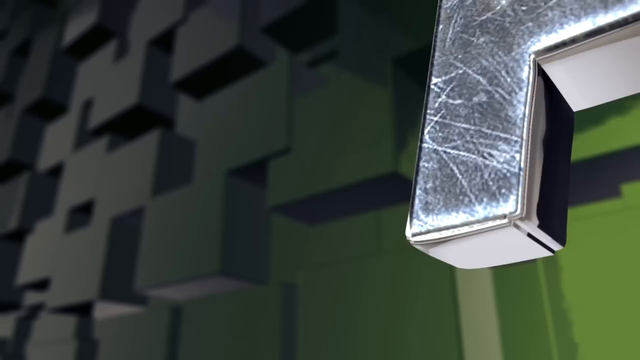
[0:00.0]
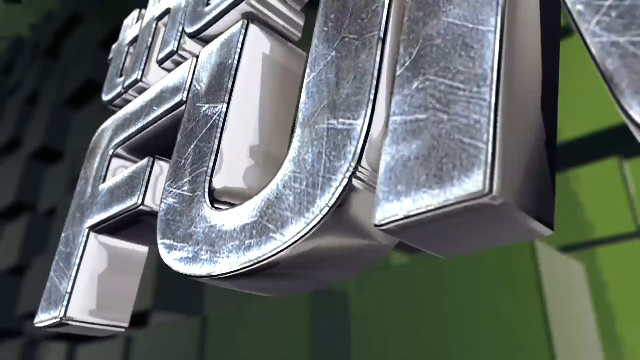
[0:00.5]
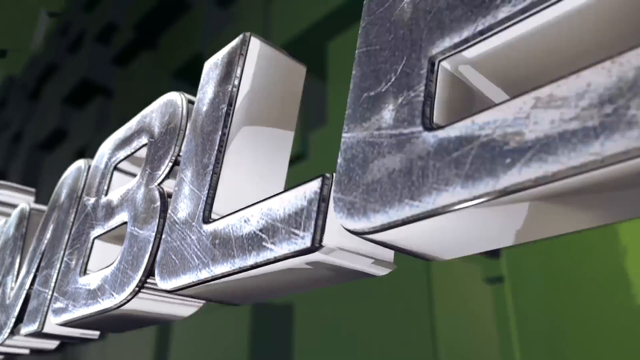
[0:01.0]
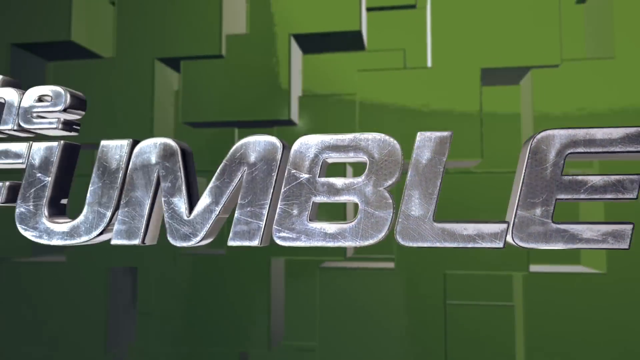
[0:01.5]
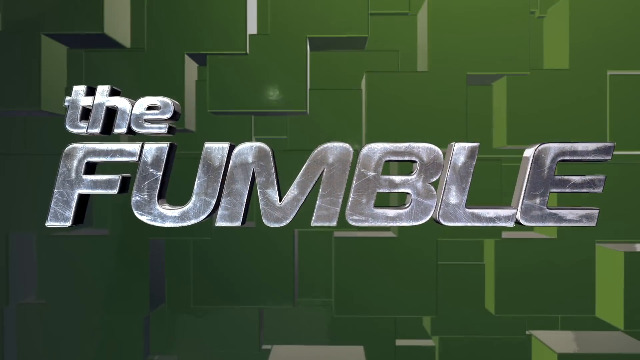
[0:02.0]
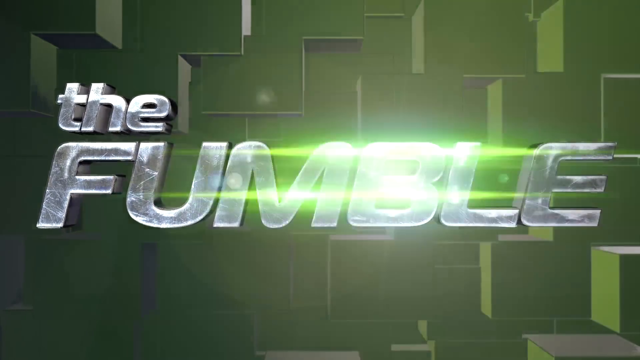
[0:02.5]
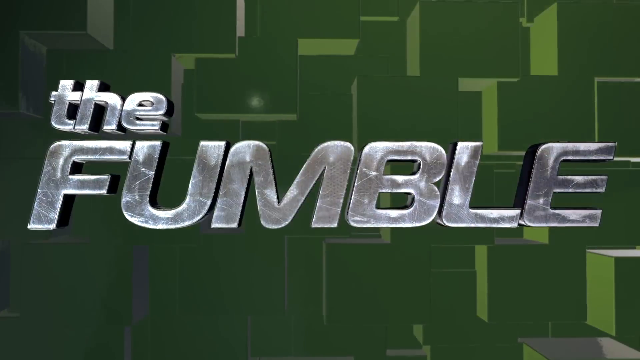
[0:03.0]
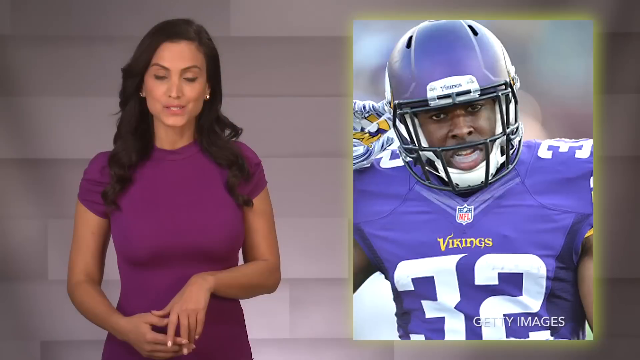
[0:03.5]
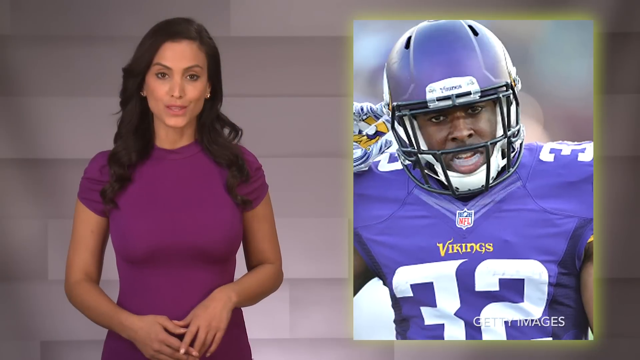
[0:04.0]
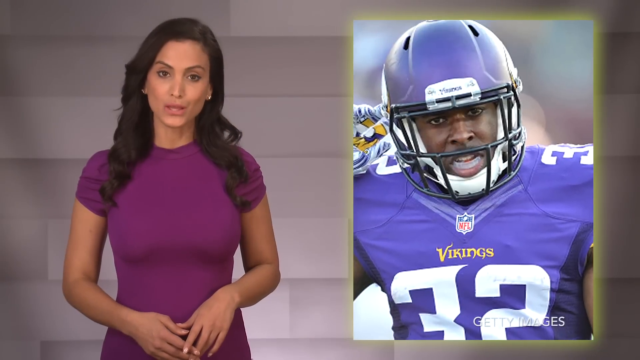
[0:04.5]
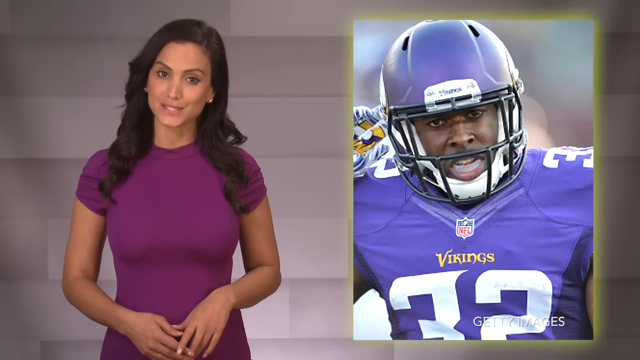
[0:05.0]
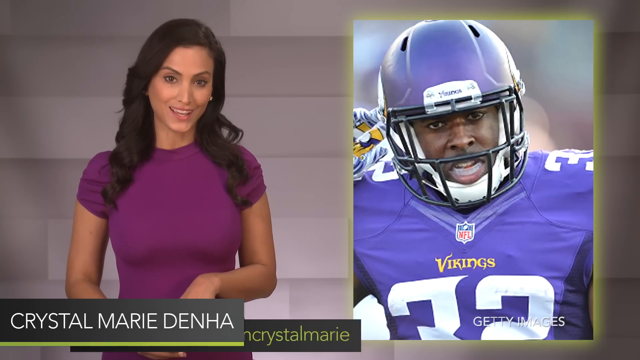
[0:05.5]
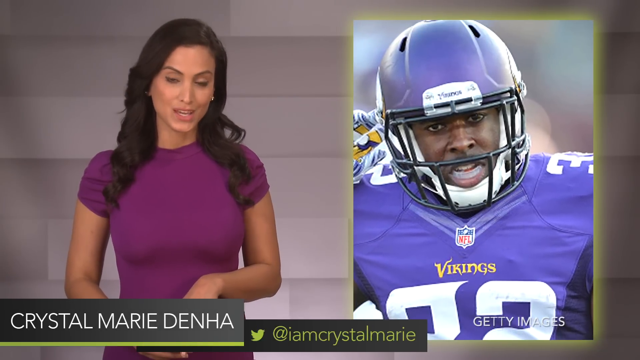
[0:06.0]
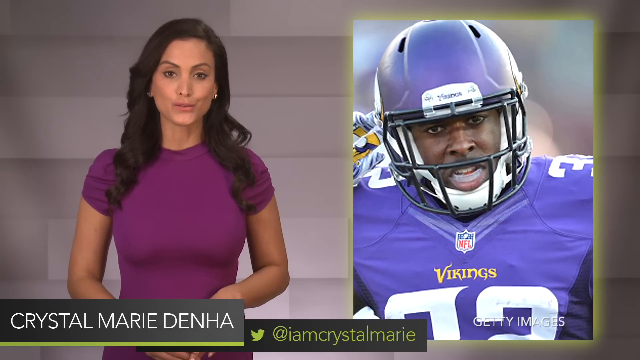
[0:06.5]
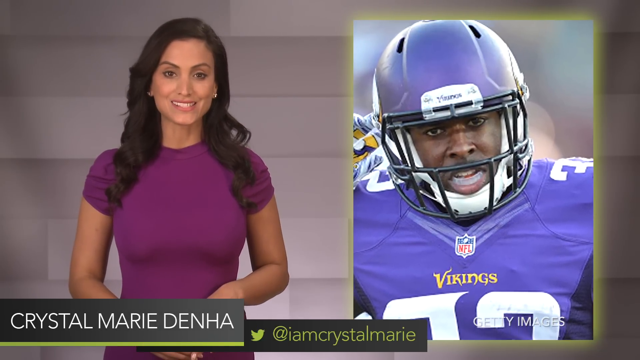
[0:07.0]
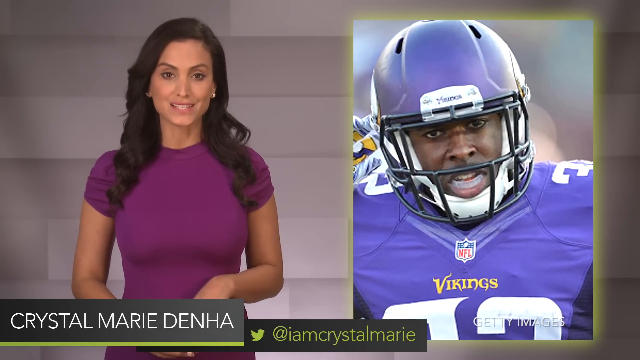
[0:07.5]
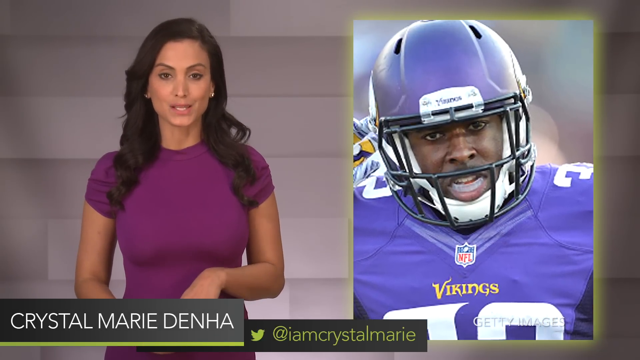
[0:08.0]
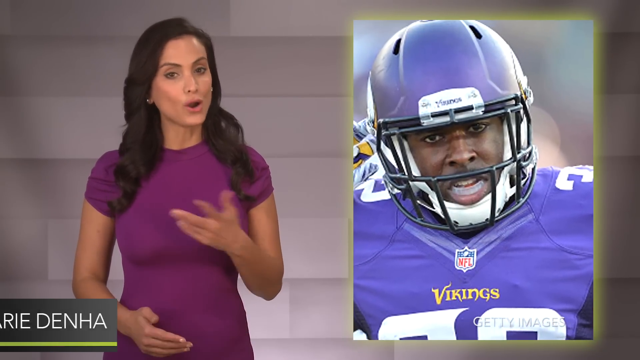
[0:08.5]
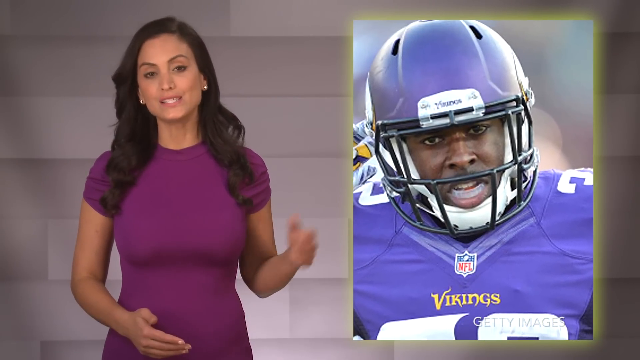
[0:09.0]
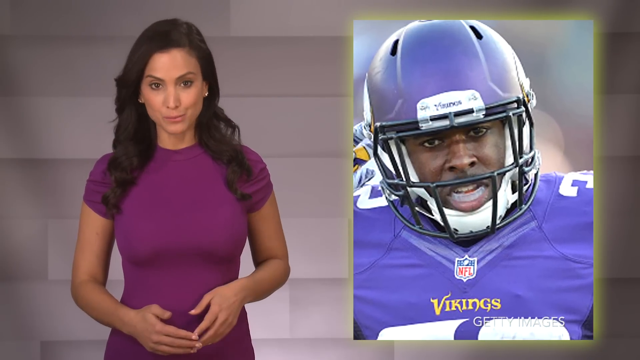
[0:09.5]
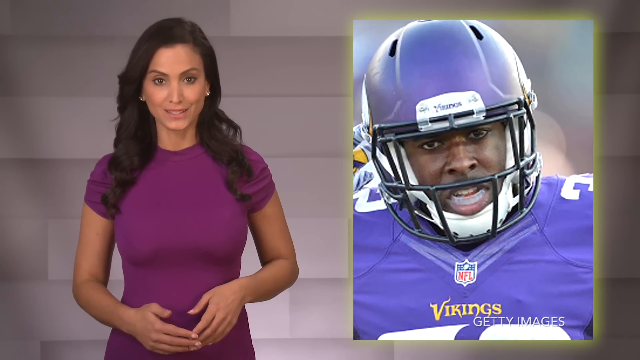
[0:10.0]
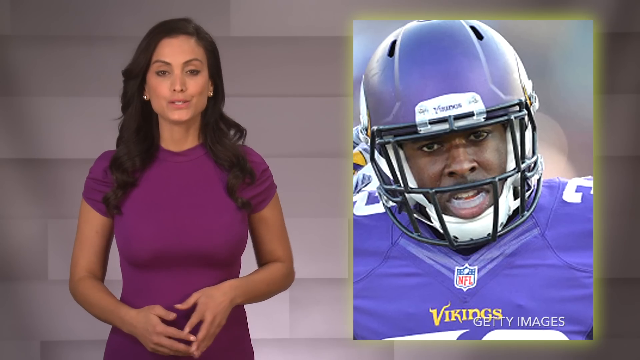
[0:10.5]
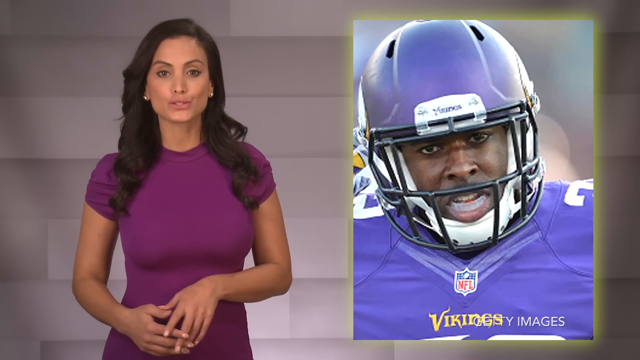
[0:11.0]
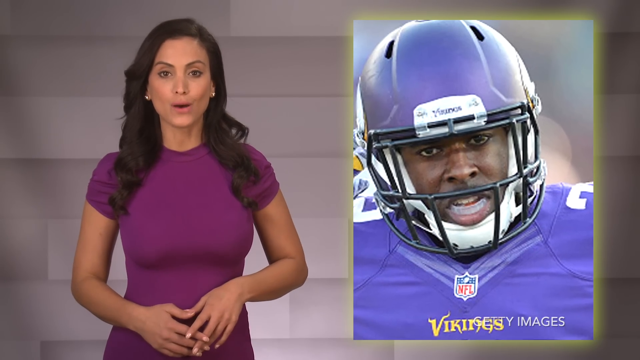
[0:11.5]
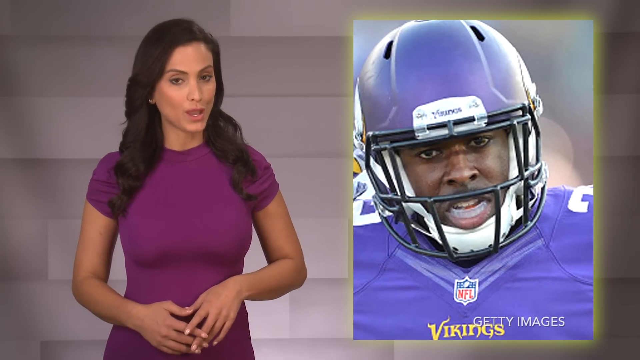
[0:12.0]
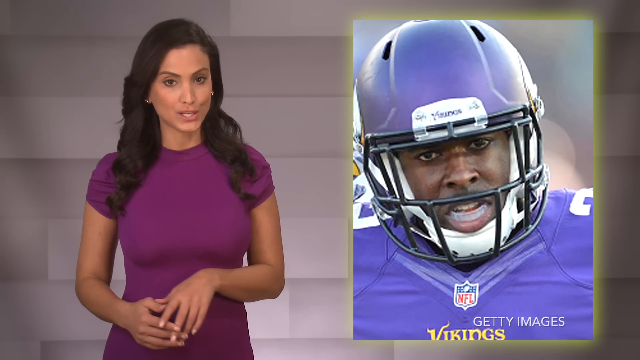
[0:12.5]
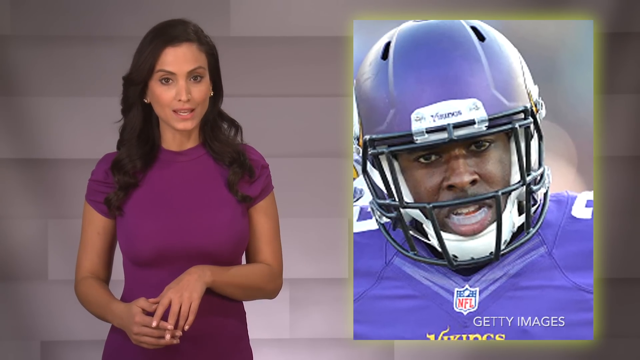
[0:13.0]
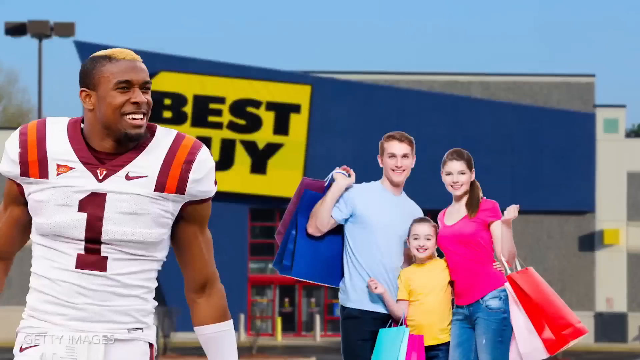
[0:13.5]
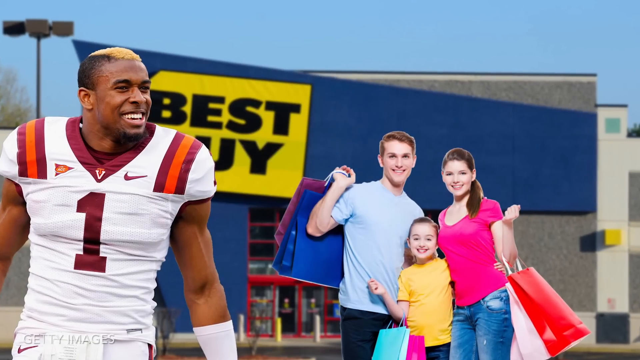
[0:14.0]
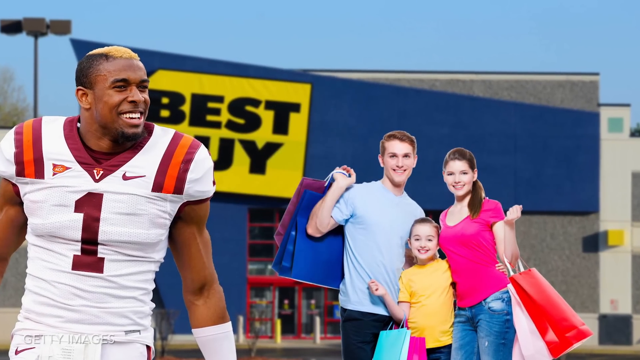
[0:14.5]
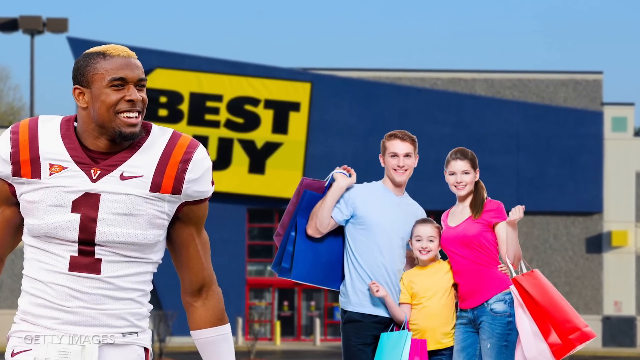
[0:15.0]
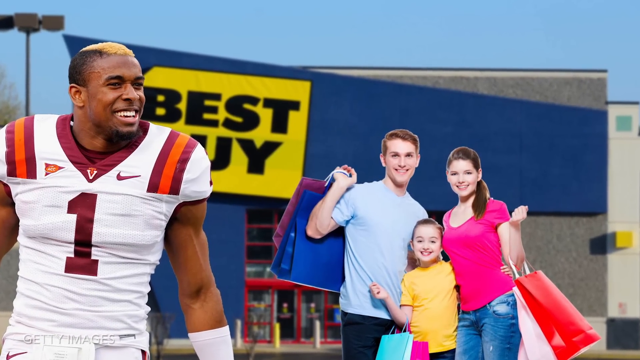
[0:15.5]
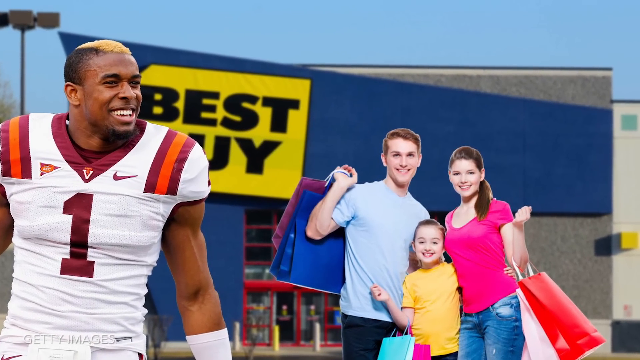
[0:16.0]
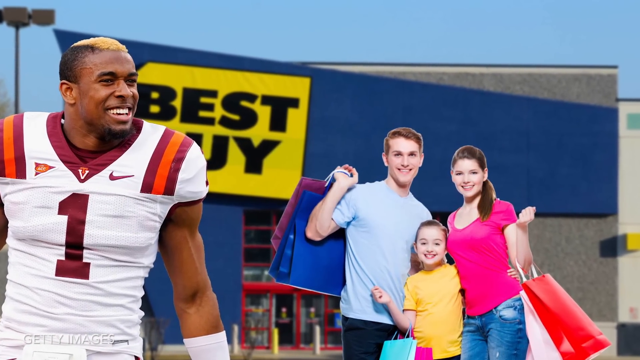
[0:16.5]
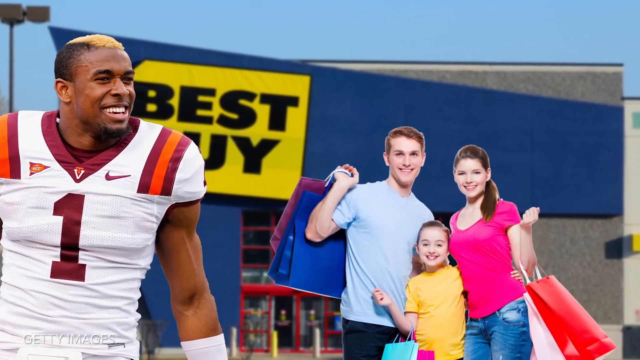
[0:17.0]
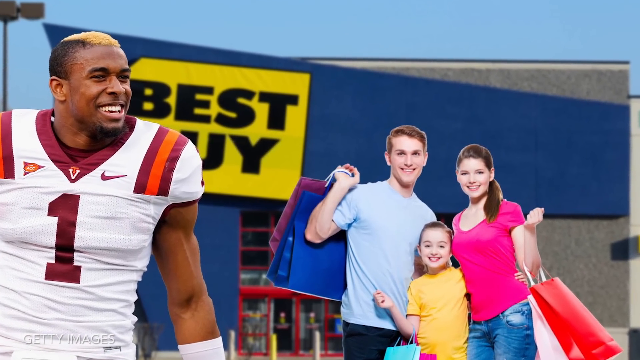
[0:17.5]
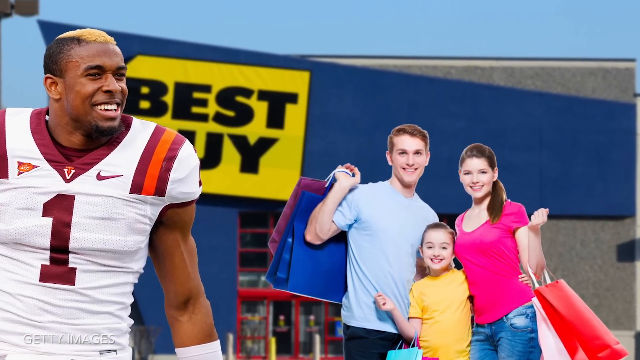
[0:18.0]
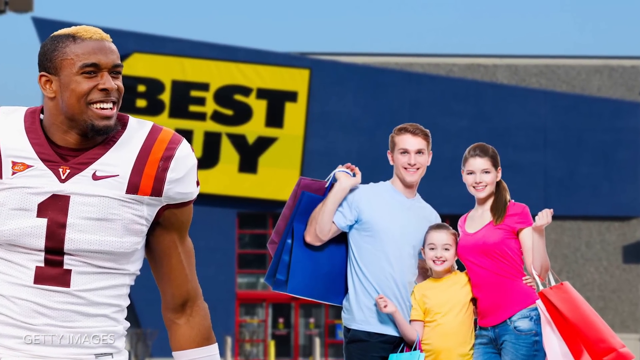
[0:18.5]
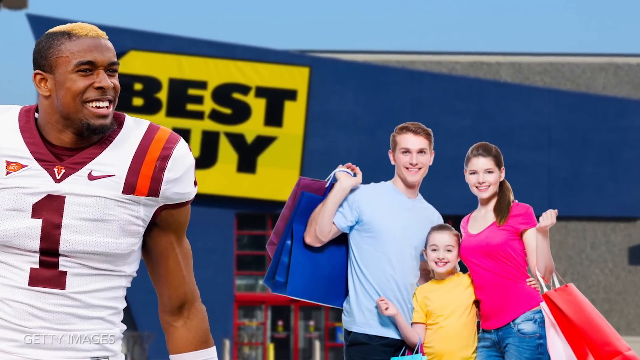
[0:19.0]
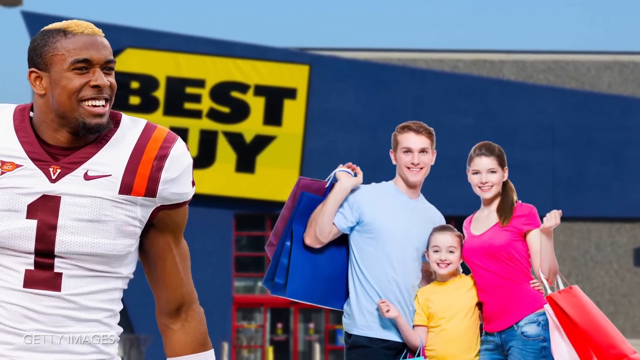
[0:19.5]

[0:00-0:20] Text at the top of the screen reads "The Fumble." A split screen follows: on the left, a female reporter with olive skin and dark hair seems to be talking about the player on the right. He is an African-American man in full uniform, with a purple helmet and a purple uniform that says "The Vikings"; it looks like a game-day shot, and he seems to be on the field. The reporter seems to keep talking about him while using hand gestures. The screen then changes: the background drops down to a Best Buy store, and a Caucasian family, a man, a woman and a girl, stand in front of the store with bags. Another football player is also there, an African-American man with dyed hair on top, wearing a white, maroon and orange jersey with the number one, a Nike check on his uniform, and white pants. The view zooms in on this image of the people.